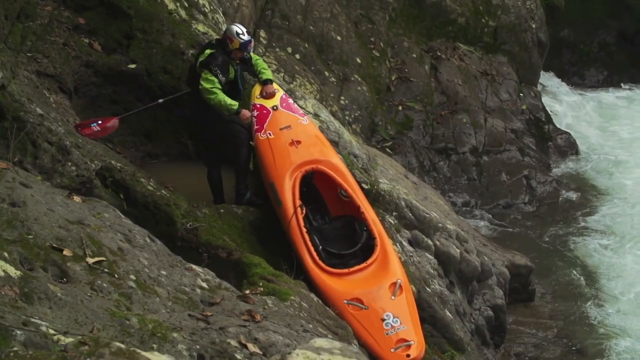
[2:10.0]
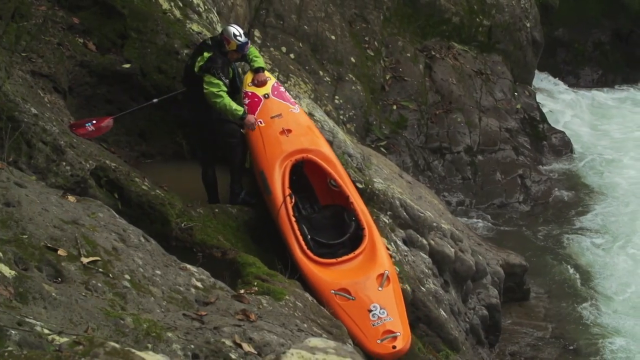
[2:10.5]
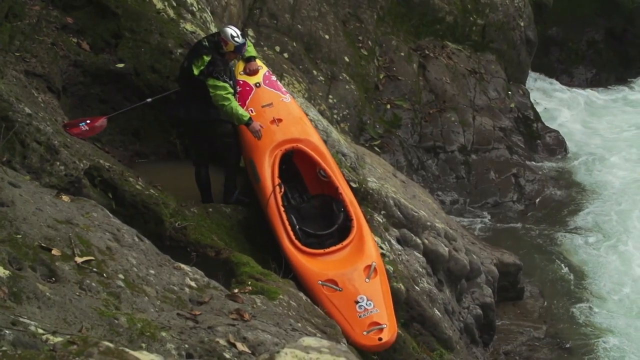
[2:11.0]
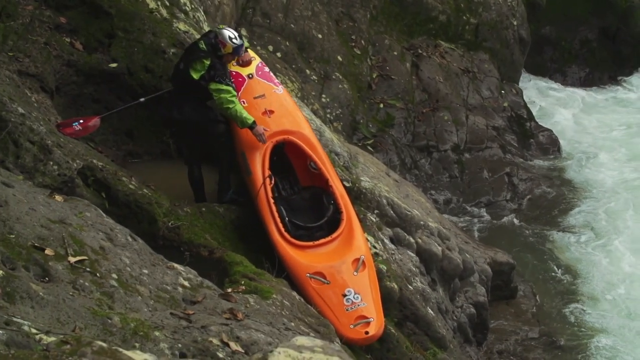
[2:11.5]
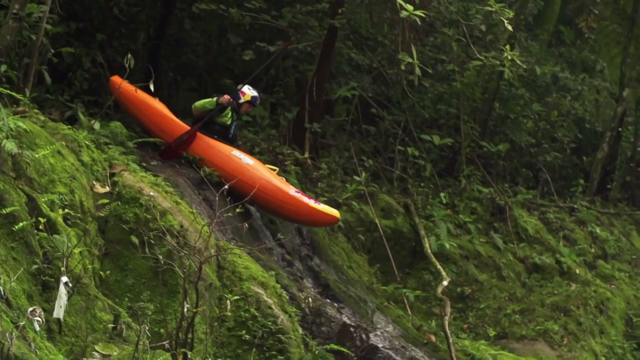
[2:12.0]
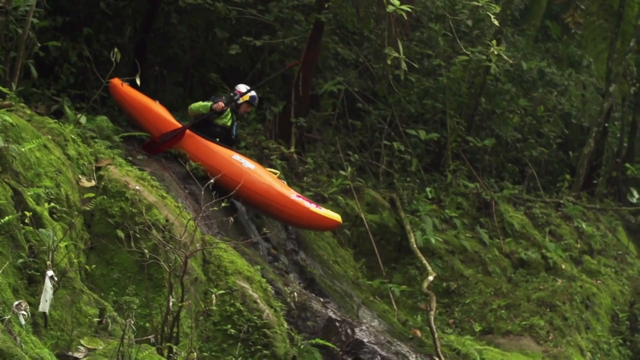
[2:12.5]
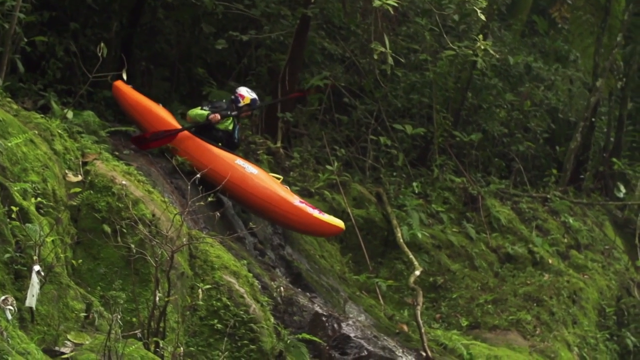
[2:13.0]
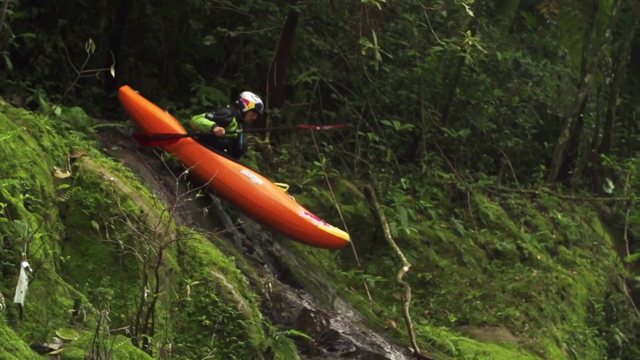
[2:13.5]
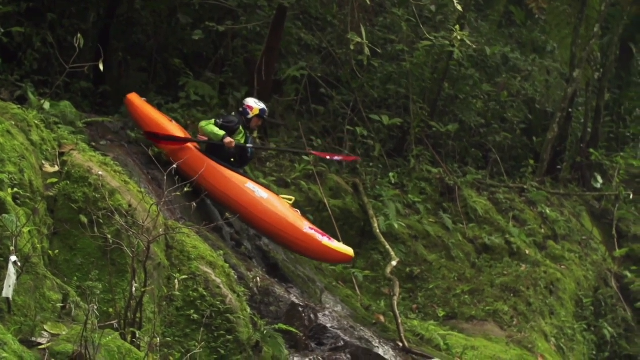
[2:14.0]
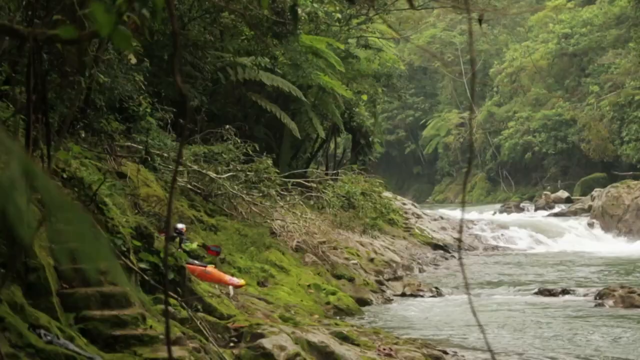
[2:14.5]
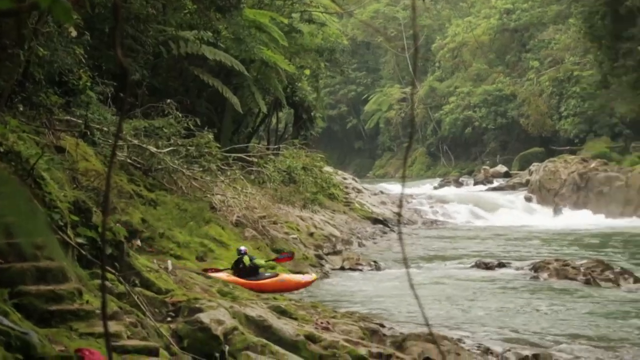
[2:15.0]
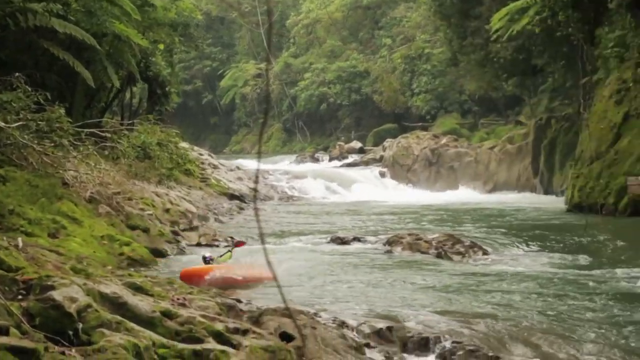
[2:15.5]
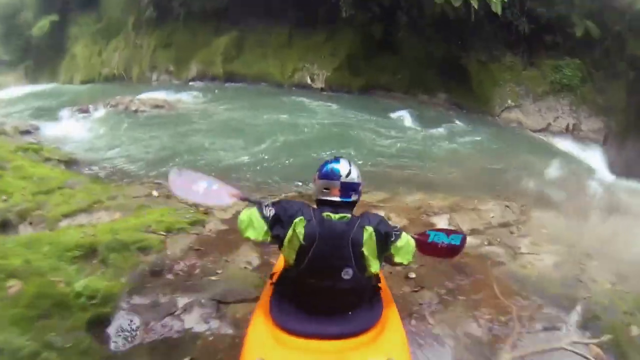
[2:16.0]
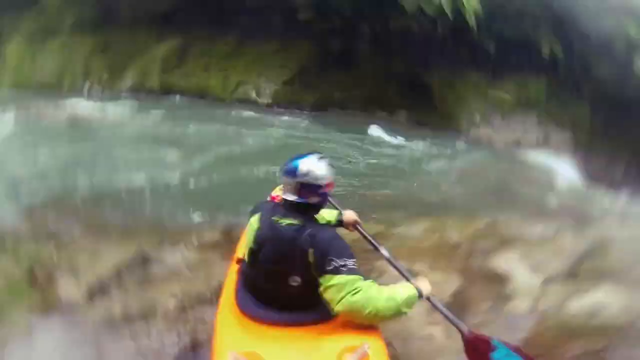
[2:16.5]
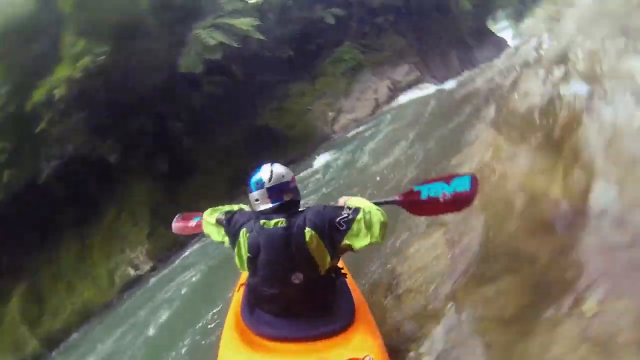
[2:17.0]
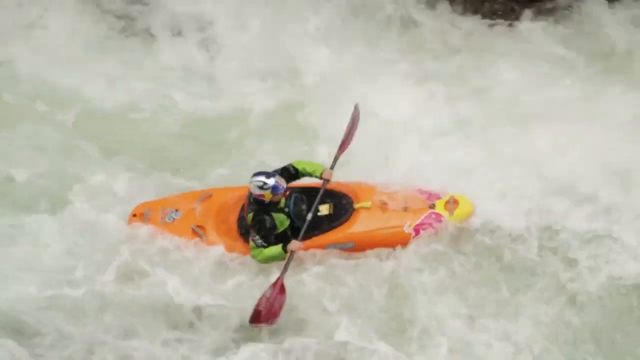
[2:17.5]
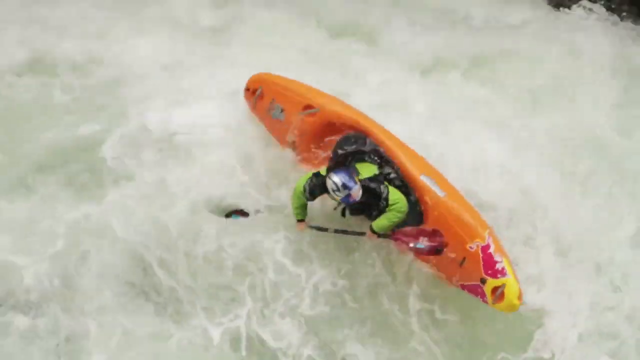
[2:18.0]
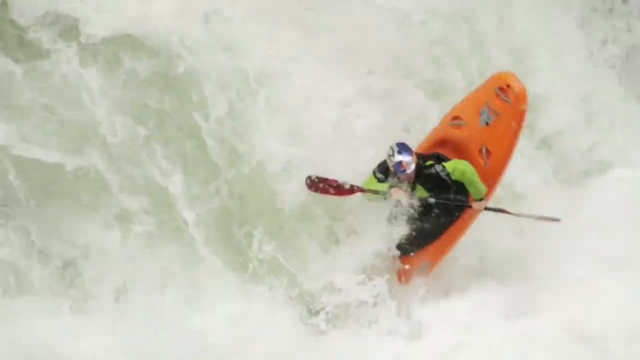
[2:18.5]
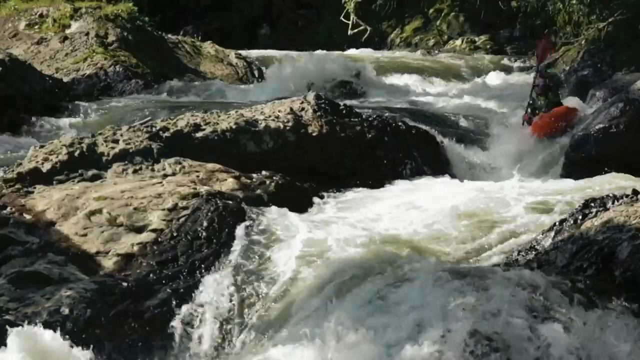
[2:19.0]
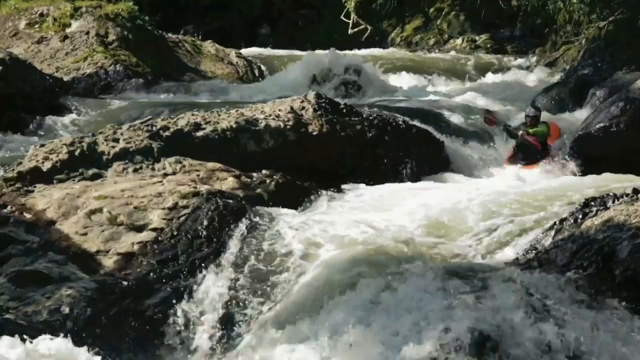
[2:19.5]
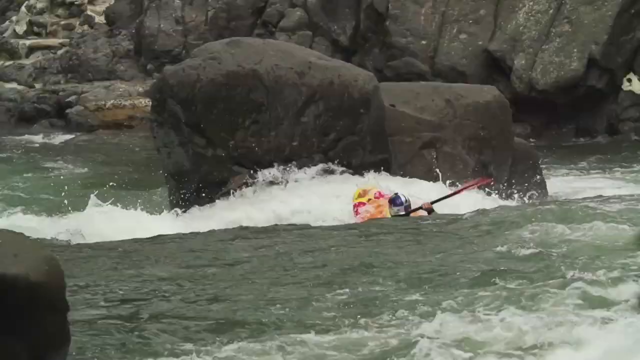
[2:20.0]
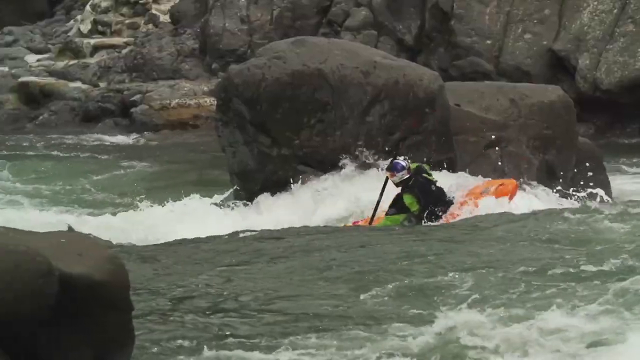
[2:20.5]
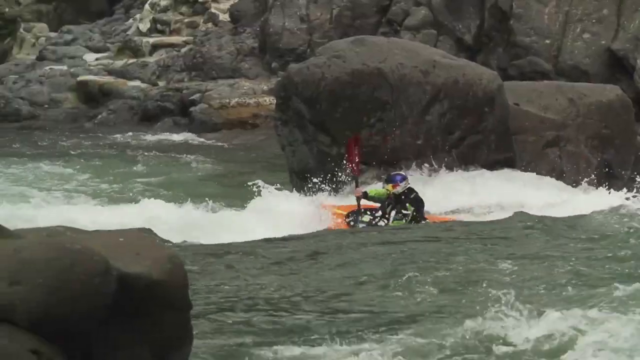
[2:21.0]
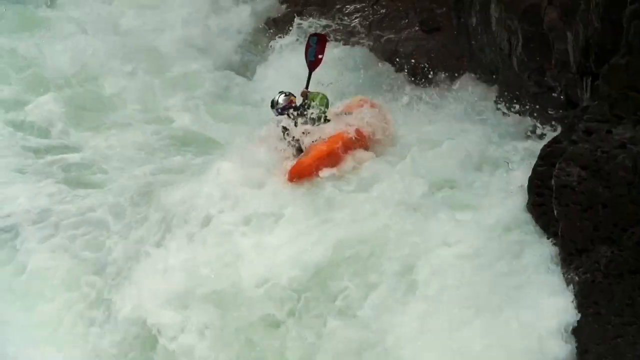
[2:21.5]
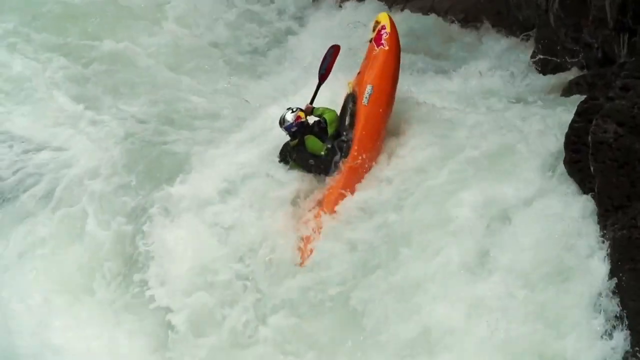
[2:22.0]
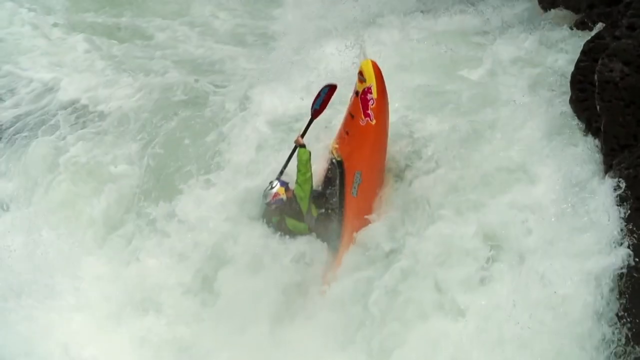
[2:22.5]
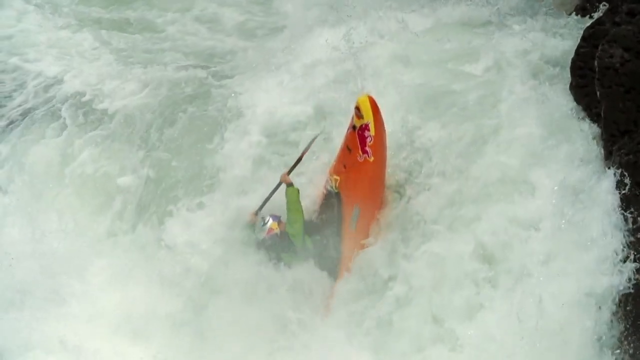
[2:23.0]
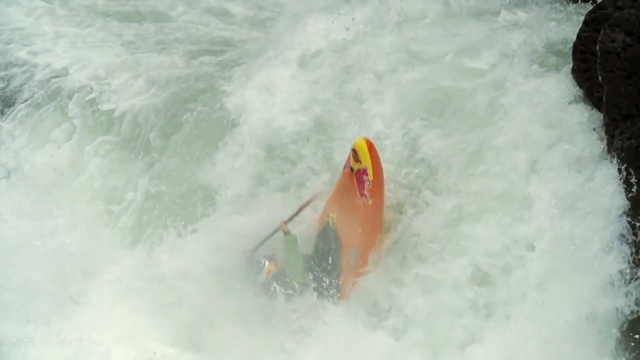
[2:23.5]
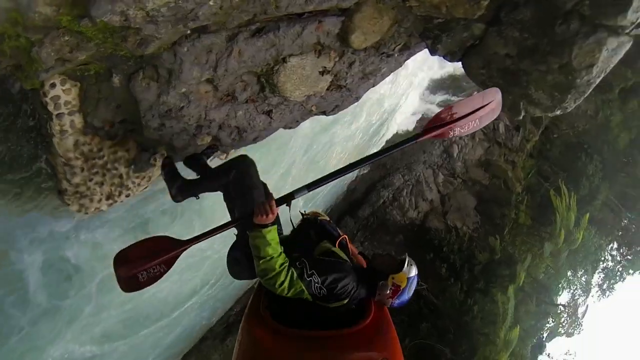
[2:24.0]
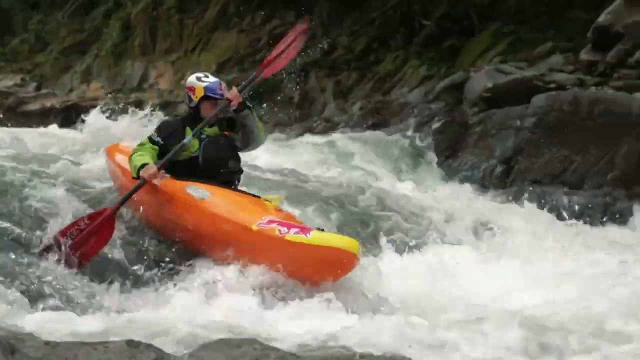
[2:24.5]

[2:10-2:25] Fast-motion kayaking scenes show fast-flowing river sections with quick camera movements. A man wearing a green and black wetsuit jacket and a helmet sits in an orange kayak up on a ledge of green grass with brown mud and some rocks, a bit of a distance from the river. He kicks off and bumps across the rocks and grass, gaining speed down the hill until he hits the river. He makes a very wide turn into the river, crashing against a wave and turning almost completely sideways, then goes through very narrow paths between rocks with very white, choppy water. In some areas he is even backwards, facing away from the flow of the water, twisted around so much that he looks like he would fall out of his kayak.